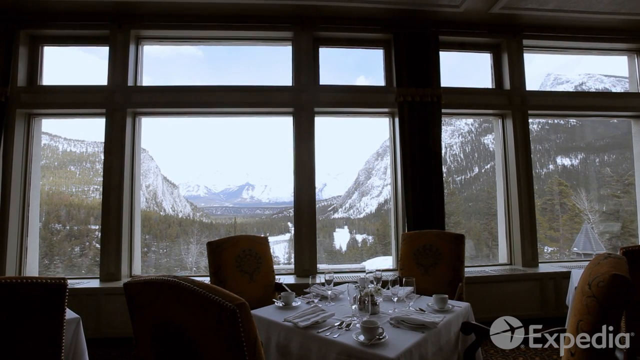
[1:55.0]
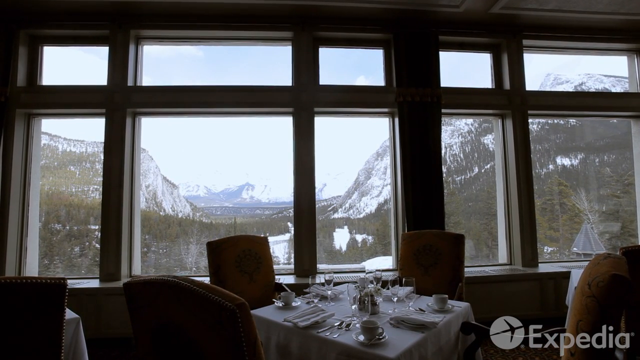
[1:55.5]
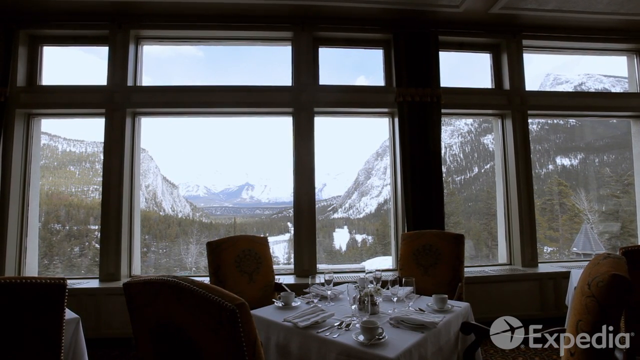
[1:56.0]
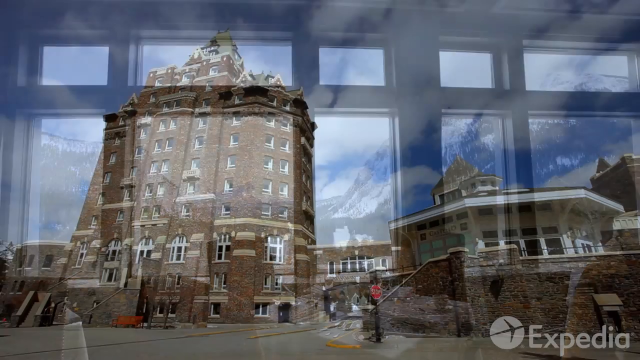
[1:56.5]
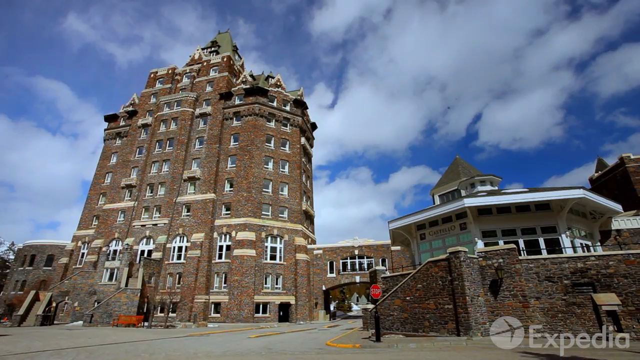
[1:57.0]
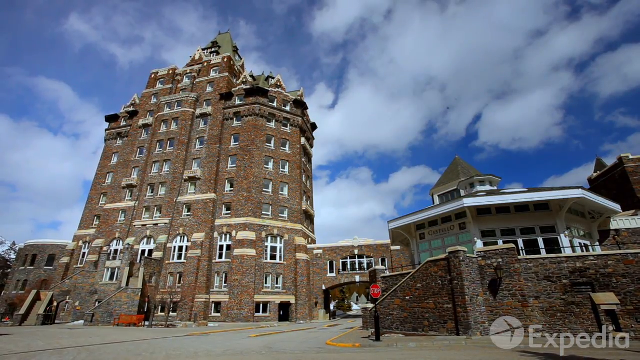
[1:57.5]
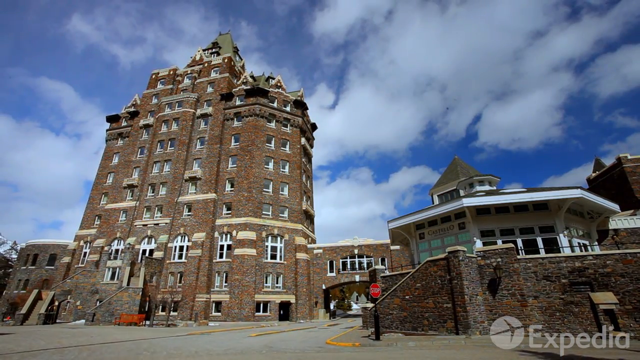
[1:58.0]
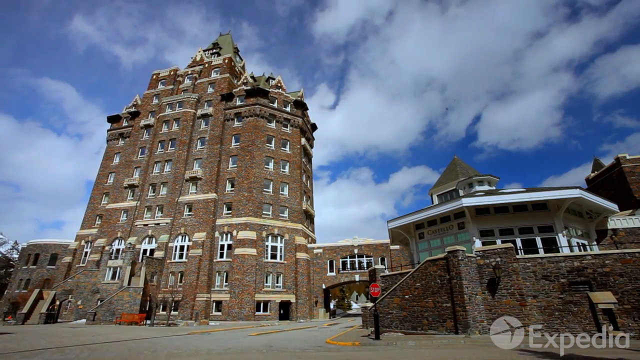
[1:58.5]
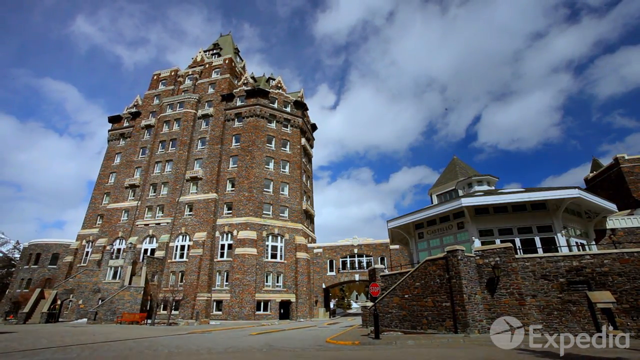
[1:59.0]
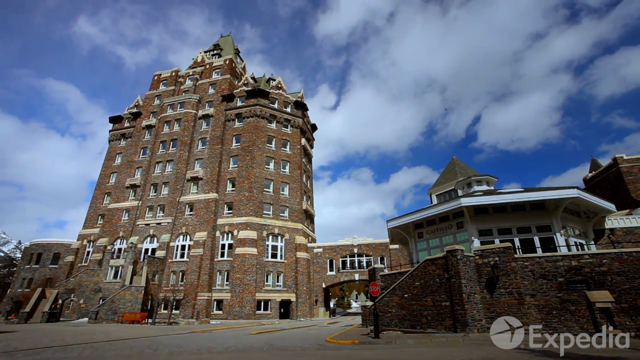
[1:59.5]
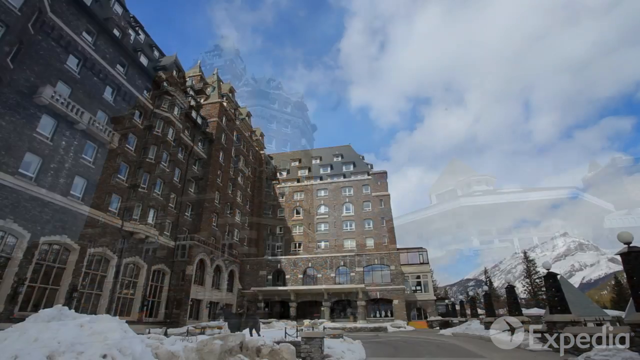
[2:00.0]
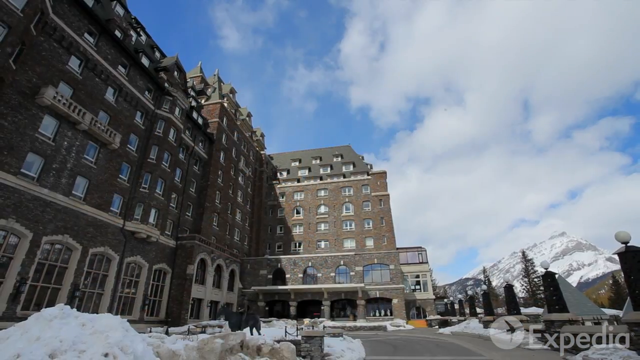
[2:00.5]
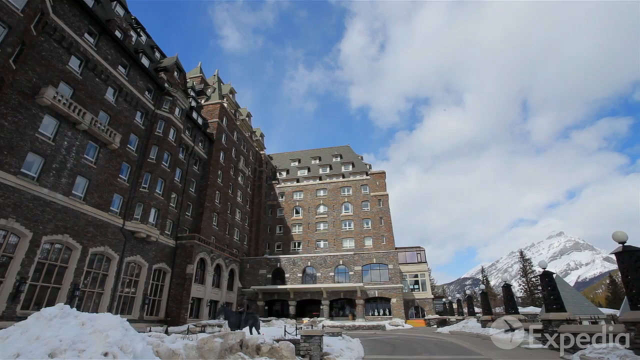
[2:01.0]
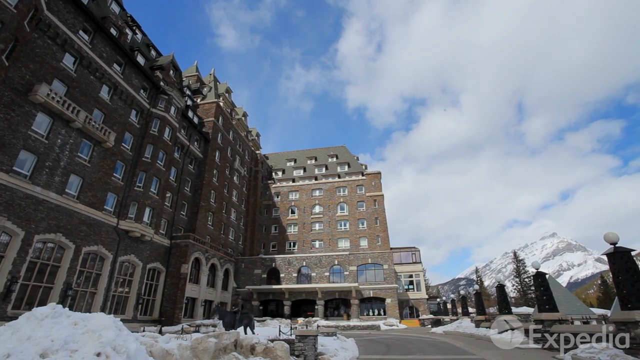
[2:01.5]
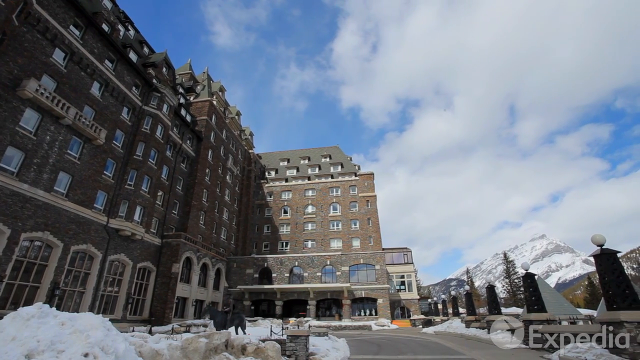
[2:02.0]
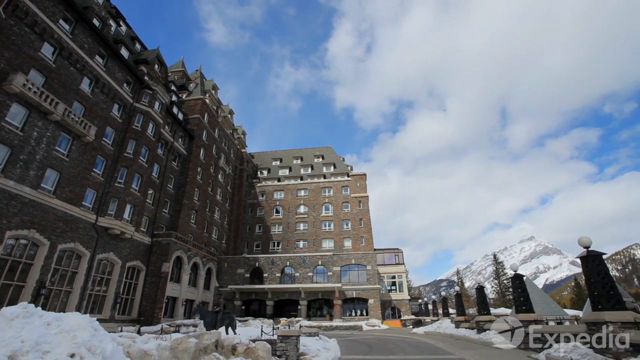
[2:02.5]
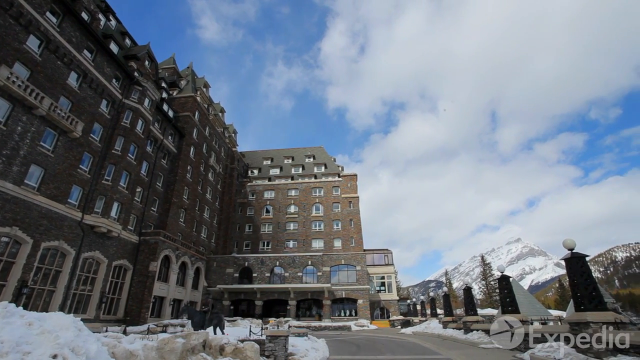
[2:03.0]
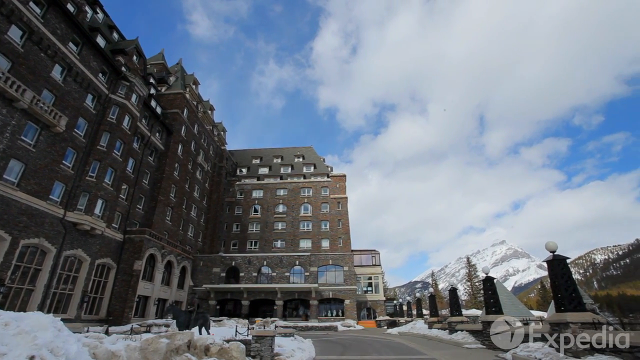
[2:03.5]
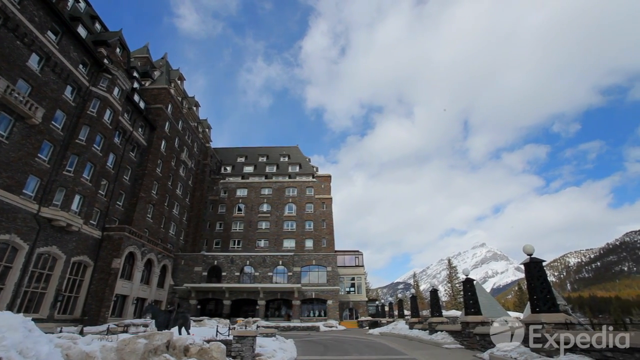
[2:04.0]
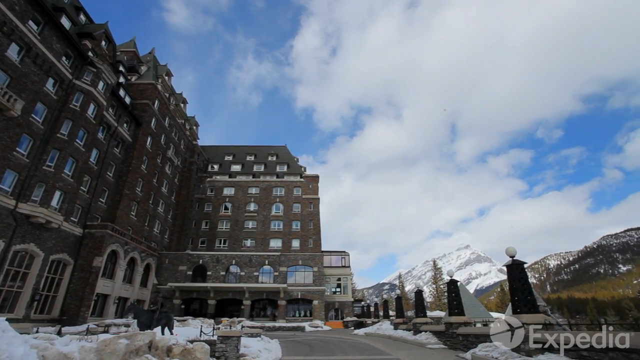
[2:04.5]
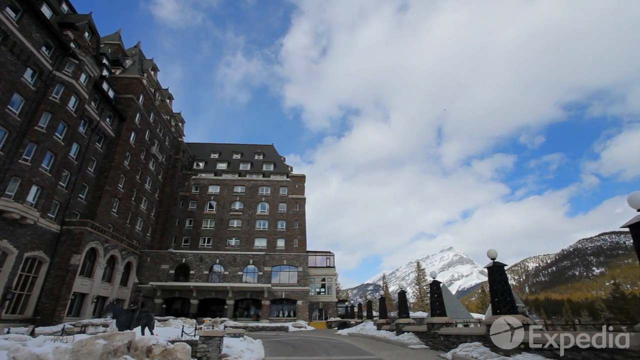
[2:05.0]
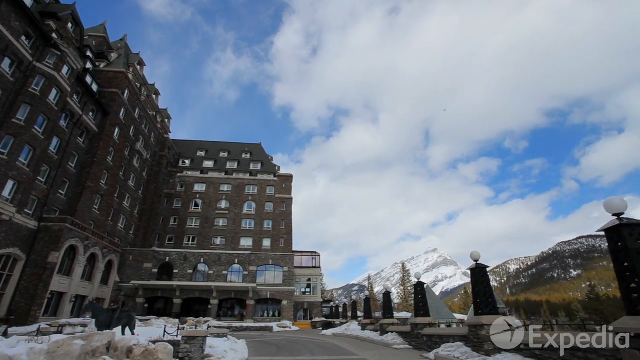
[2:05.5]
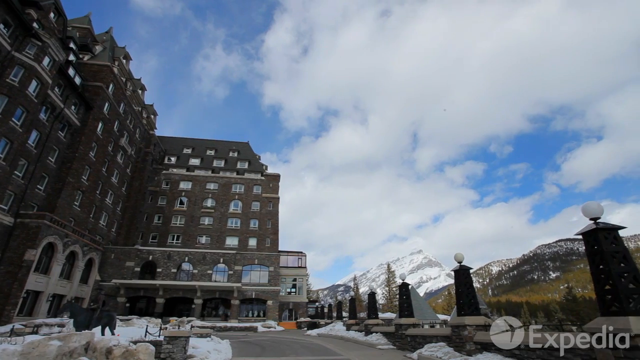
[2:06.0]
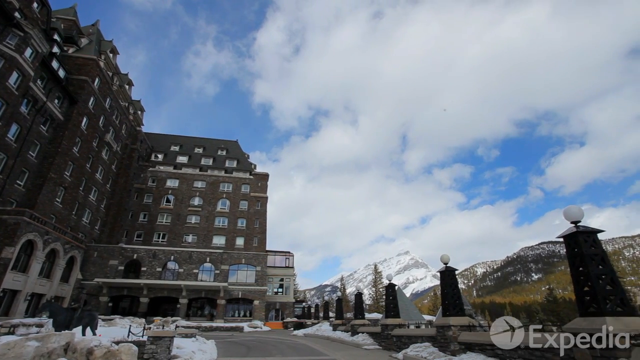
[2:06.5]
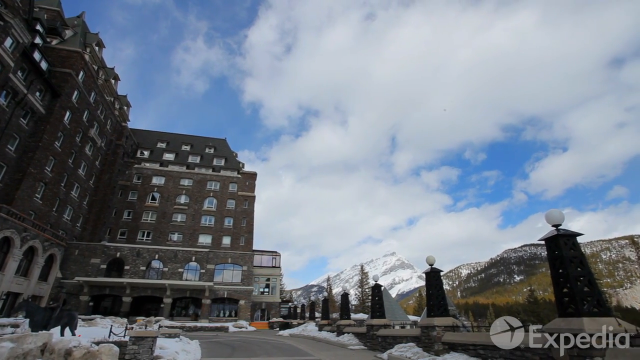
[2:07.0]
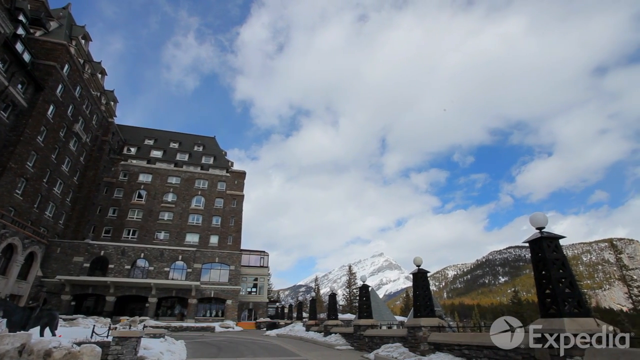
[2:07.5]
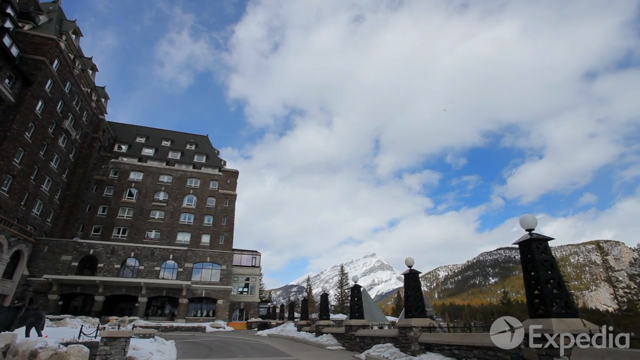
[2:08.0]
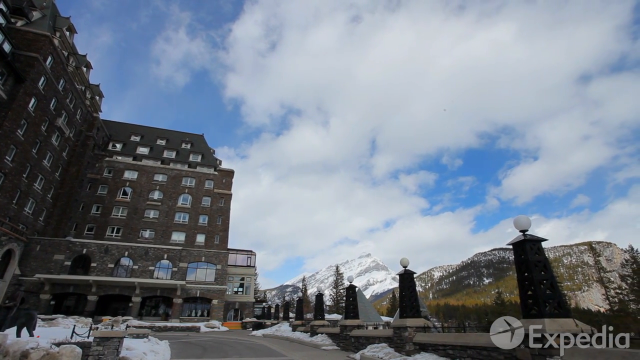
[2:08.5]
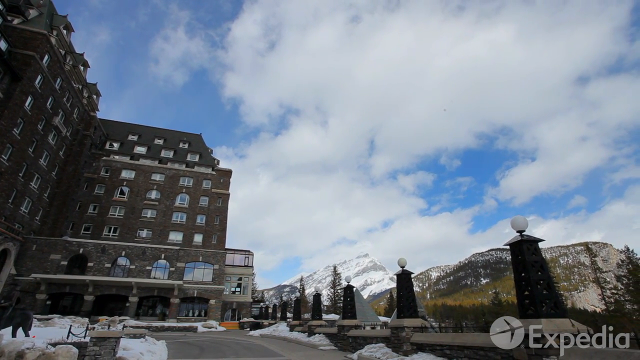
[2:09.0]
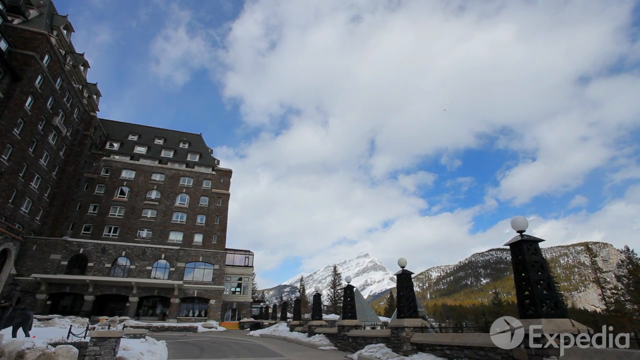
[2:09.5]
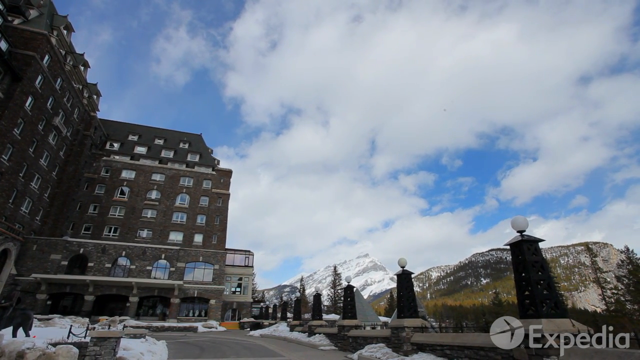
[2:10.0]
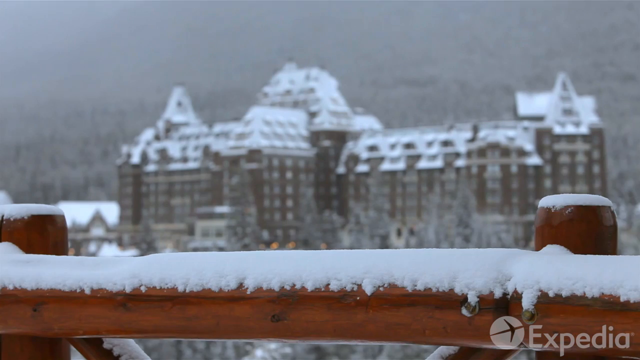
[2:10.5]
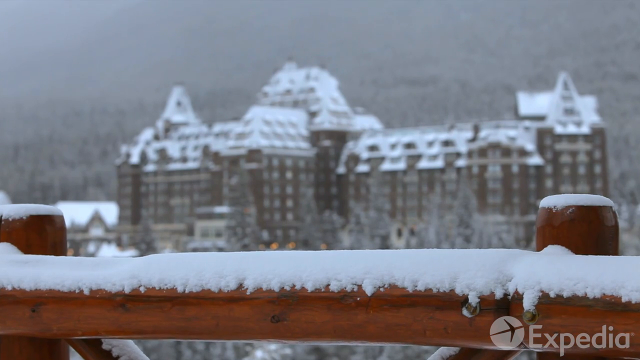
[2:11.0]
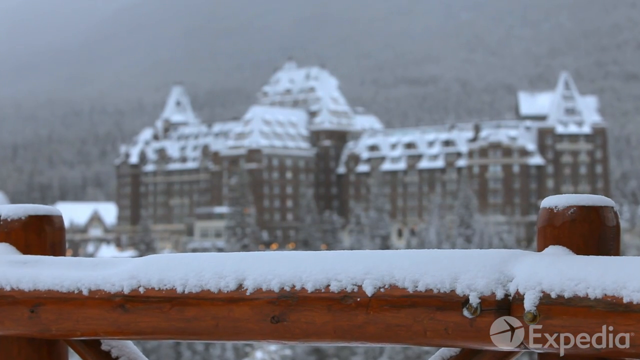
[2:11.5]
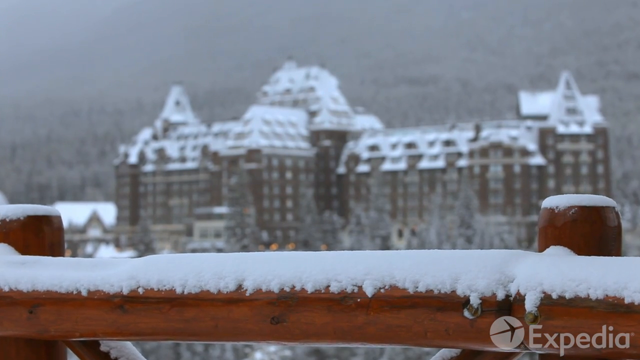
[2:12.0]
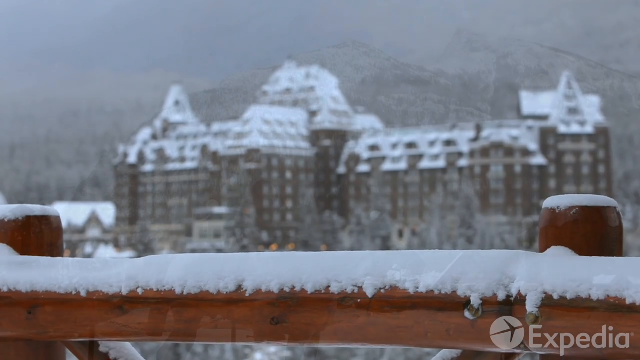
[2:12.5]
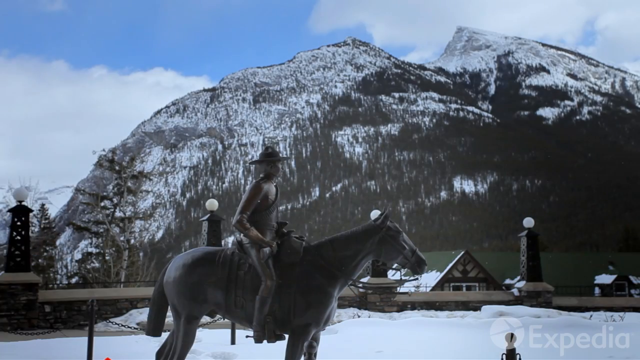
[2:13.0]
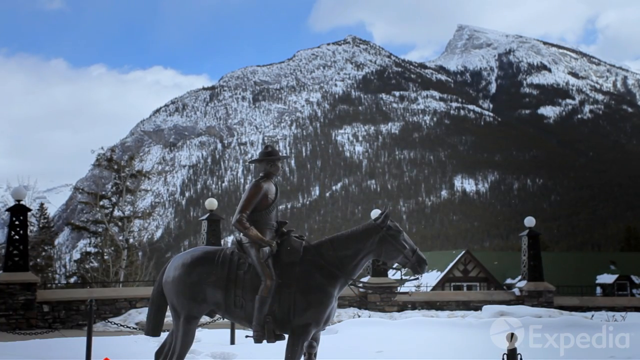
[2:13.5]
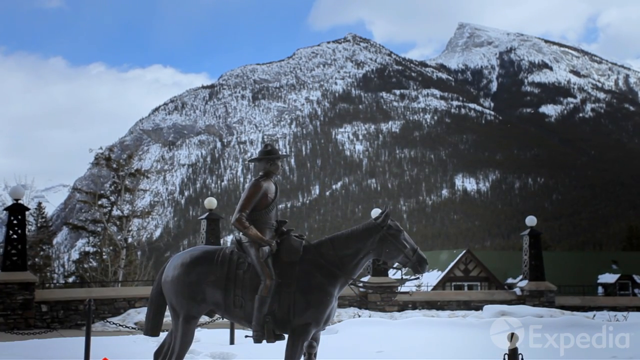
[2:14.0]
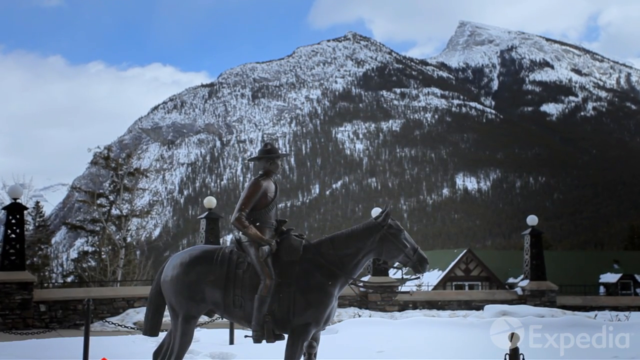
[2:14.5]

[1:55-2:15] In the dining area there are comfortable-looking chairs, with cutlery and fine glasses on the table. Next is an outside shot of the building with blue skies and clouds in the background; the view zooms out a little. Another shot of the building follows as the video starts to pan to the right, showing more of the mountains and blue skies. Next is a shot of a fence with fresh snow on top of it and an out-of-focus building in the background. Then the sculpture in front of the building is shown: a man sitting on a horse.